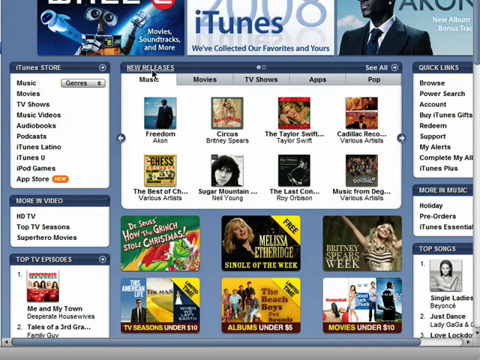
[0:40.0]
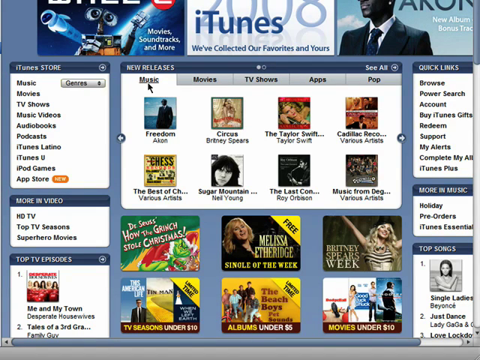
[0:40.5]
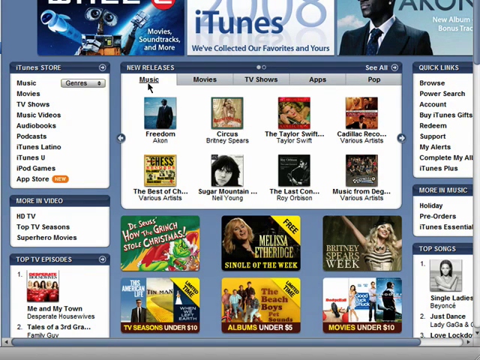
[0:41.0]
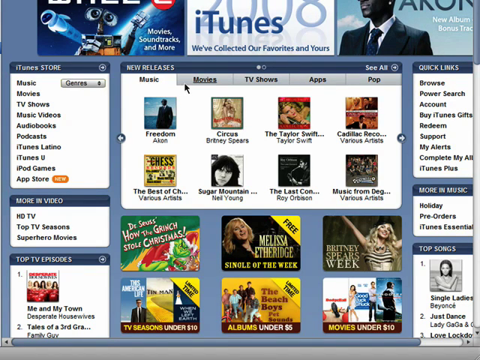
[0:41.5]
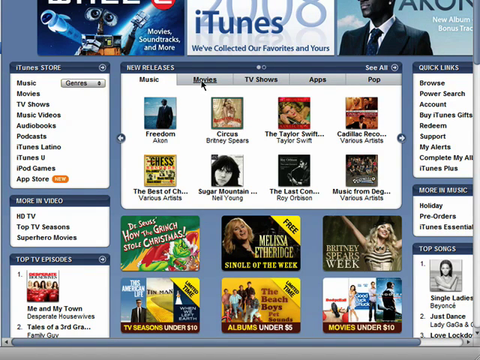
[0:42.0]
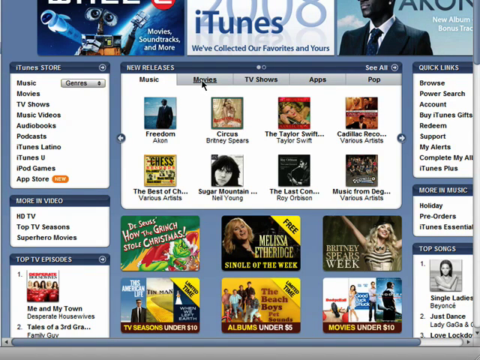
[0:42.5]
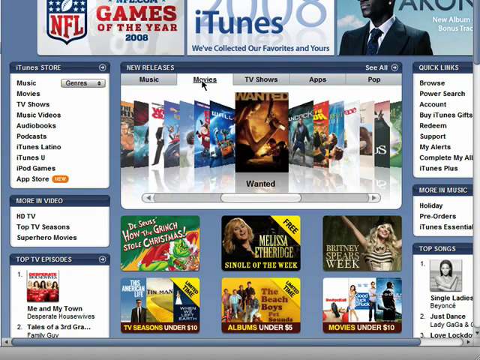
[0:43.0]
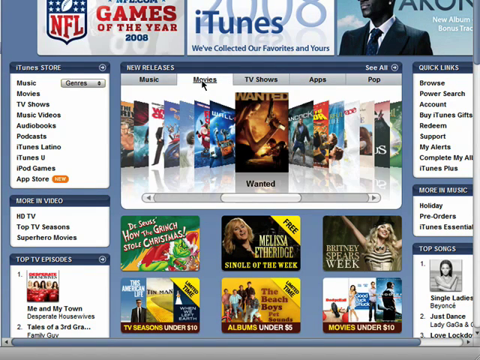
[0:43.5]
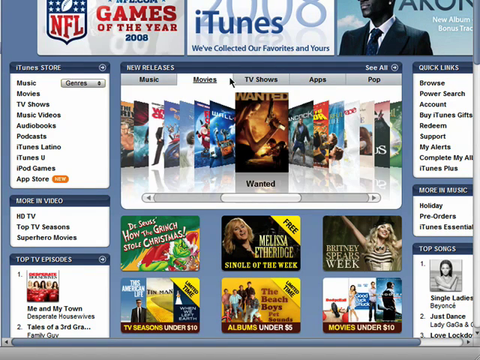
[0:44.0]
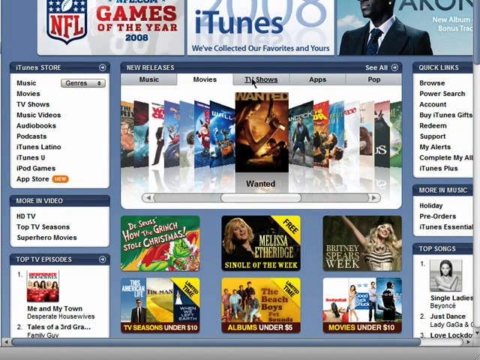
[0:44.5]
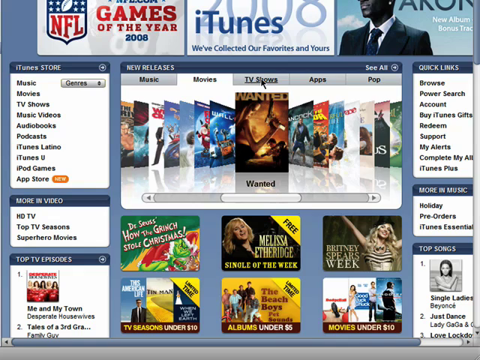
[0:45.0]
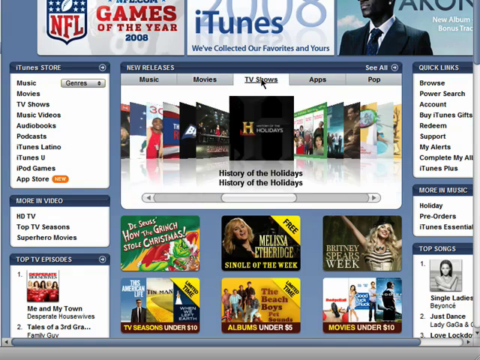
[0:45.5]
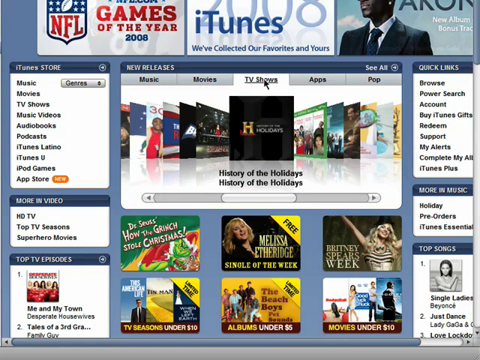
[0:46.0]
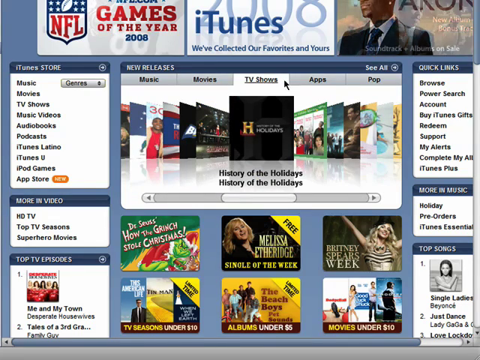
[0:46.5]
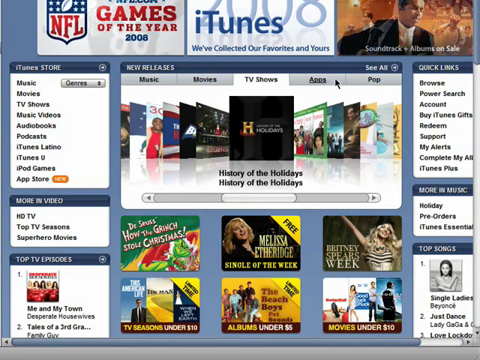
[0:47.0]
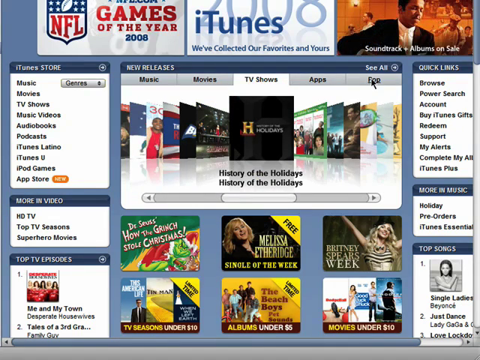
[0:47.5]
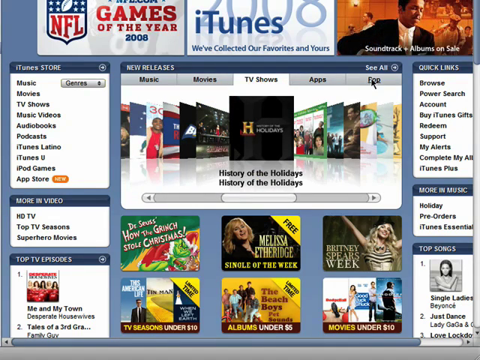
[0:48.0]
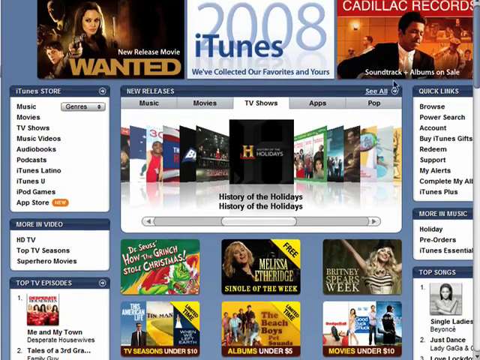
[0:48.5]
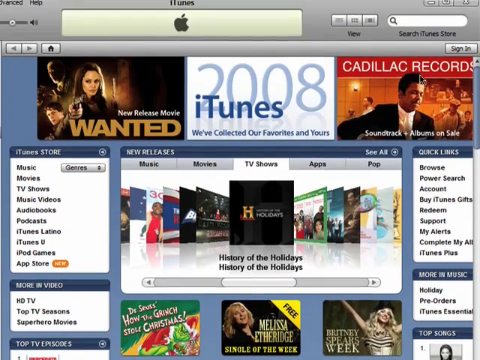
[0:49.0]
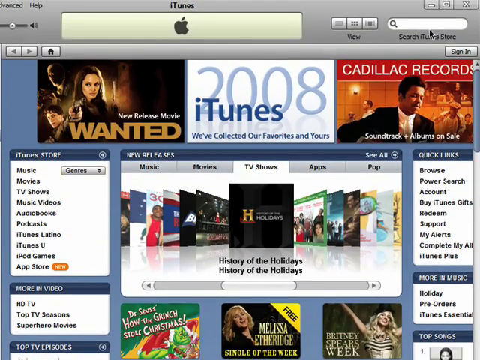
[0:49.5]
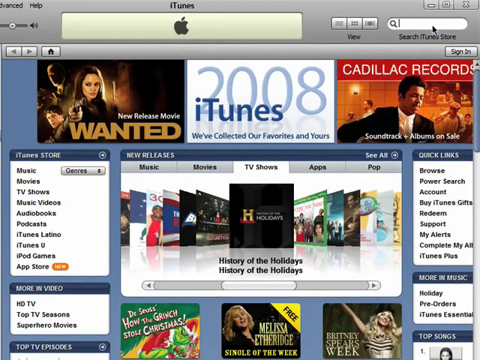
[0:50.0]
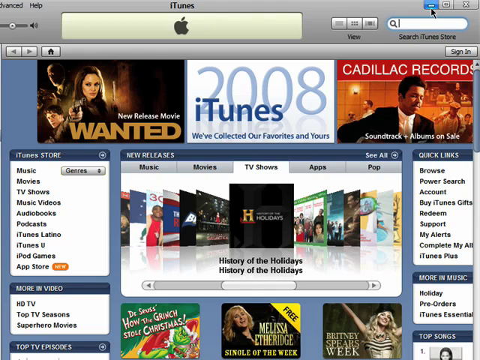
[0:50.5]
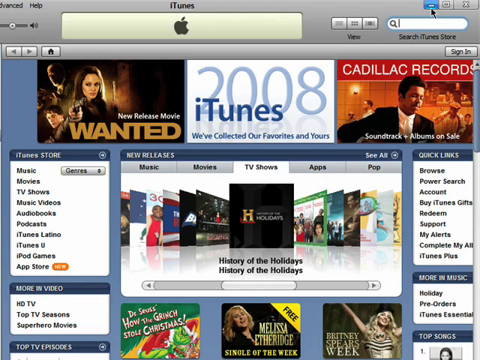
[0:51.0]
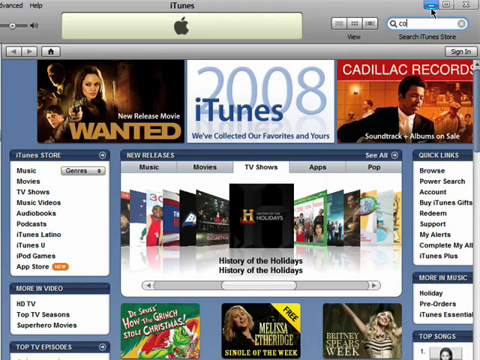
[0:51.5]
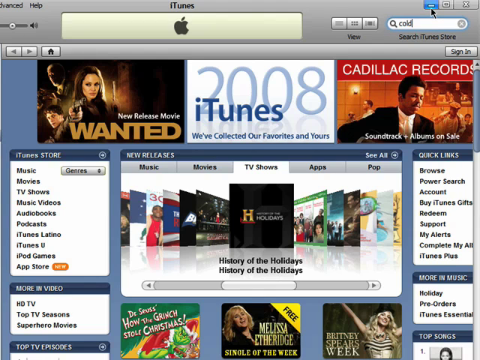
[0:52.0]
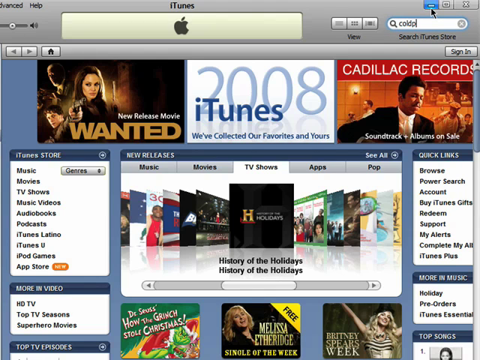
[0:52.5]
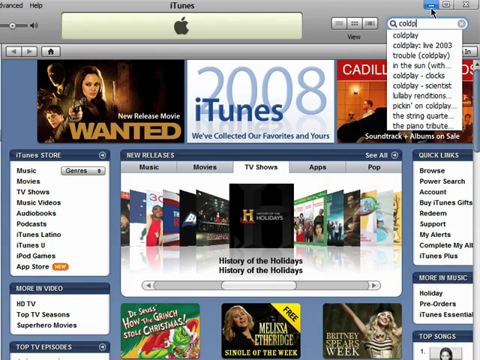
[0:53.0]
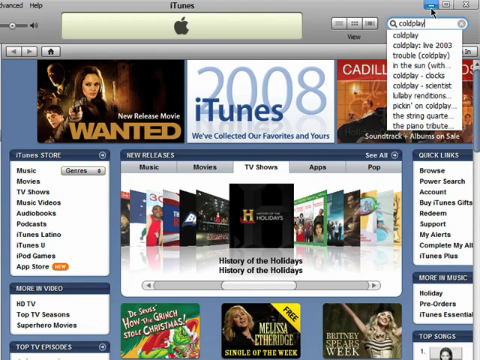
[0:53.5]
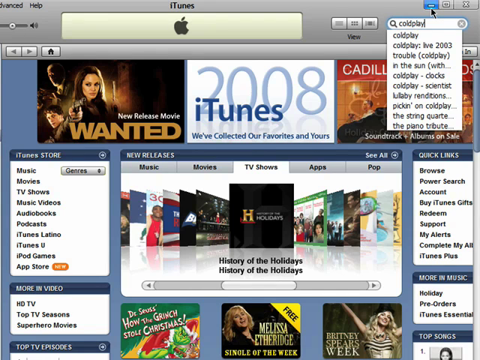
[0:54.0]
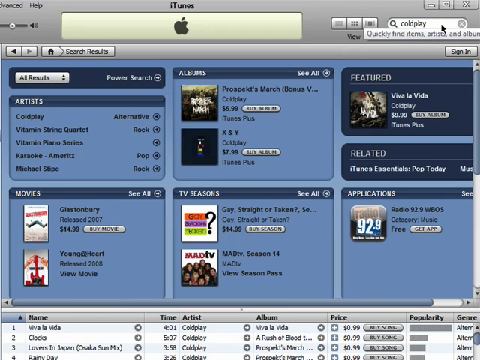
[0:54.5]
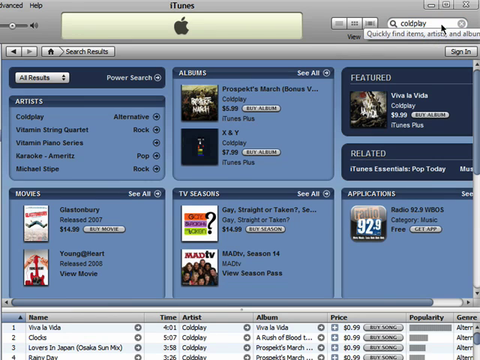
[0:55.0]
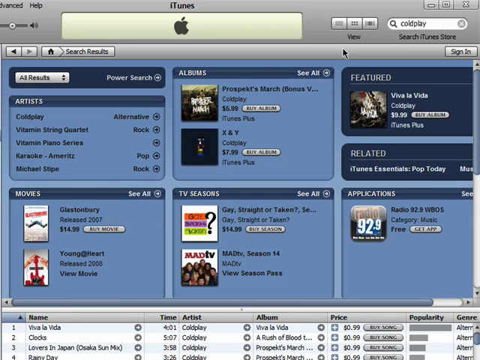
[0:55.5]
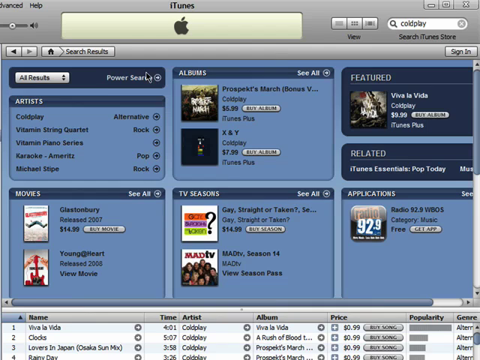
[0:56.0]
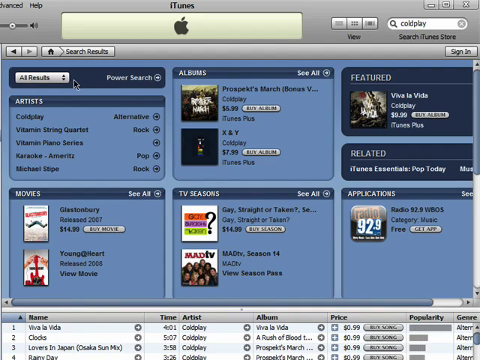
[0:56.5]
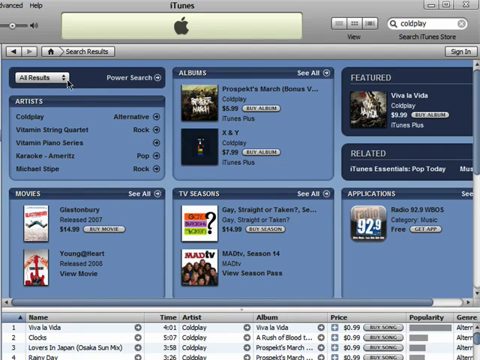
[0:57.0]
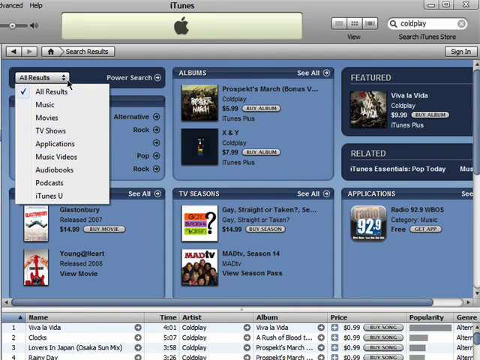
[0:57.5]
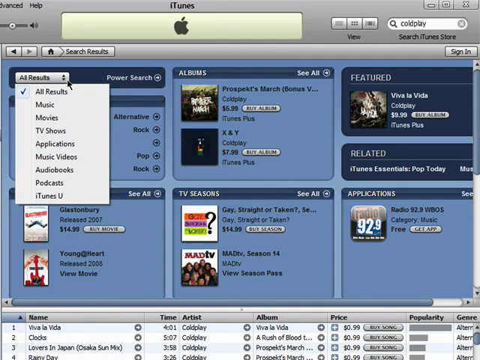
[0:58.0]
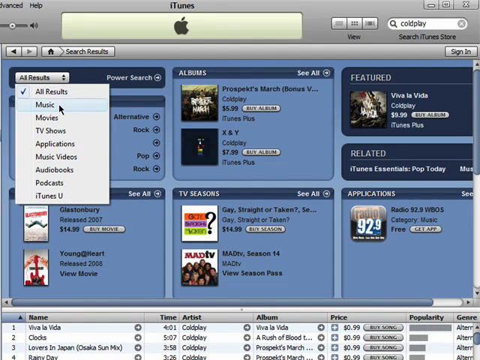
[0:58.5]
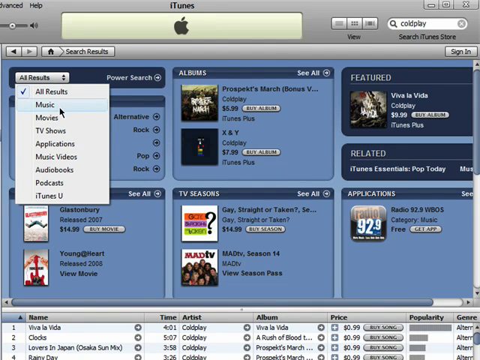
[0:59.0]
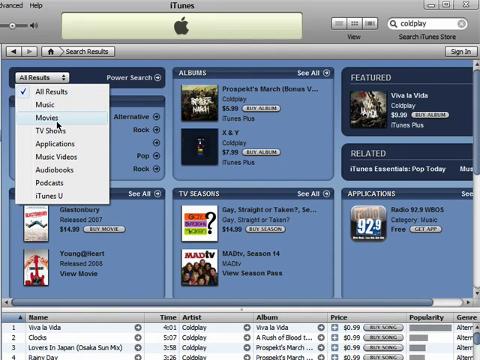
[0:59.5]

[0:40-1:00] In the iTunes Store, the new releases section is browsed, where Freedom by Akon, Circus by Britney Spears and the Taylor Swift album appear. The movies category is opened, with Wanted showing up first, next to Hancock, along with Wall-E, Kung Fu Panda, Amadeus and many other movies. In the TV show section, History of the Holidays by the History Channel is the first to appear. Next, the search in the iTunes Store is used to look up Coldplay, and the Viva La Vida album appears as the featured result at a price of $9.99. Other records such as Prospekt's March and X&Y by Coldplay also appear, as well as some movies, TV seasons and applications that do not seem to have anything to do with Coldplay.